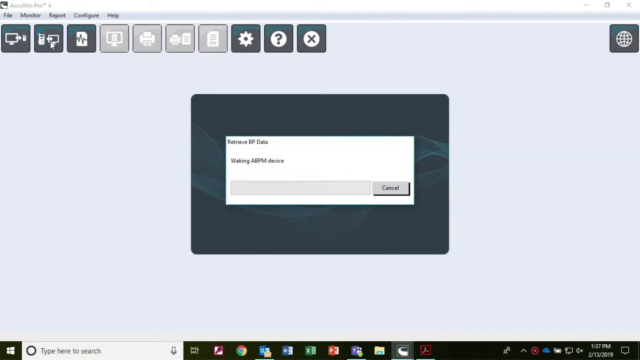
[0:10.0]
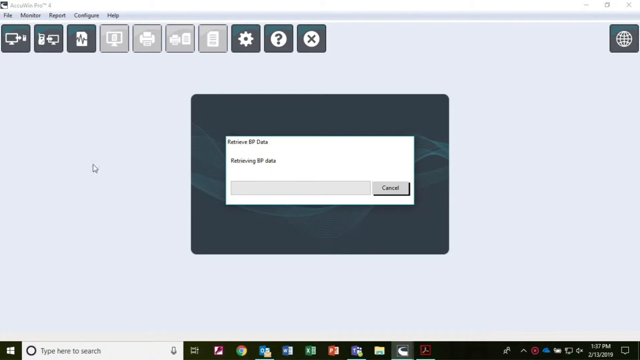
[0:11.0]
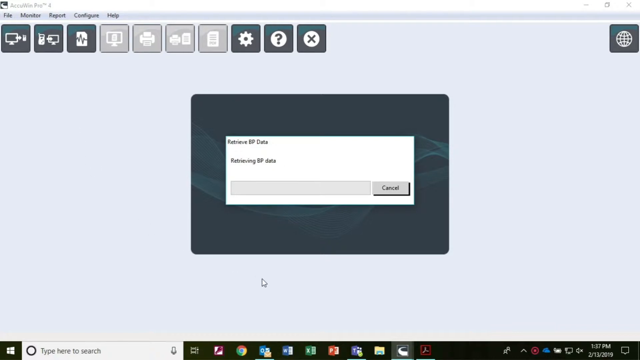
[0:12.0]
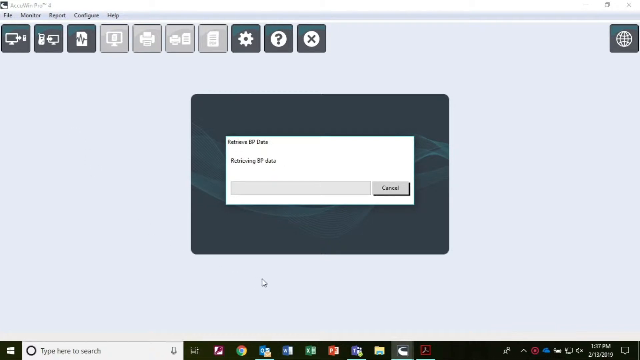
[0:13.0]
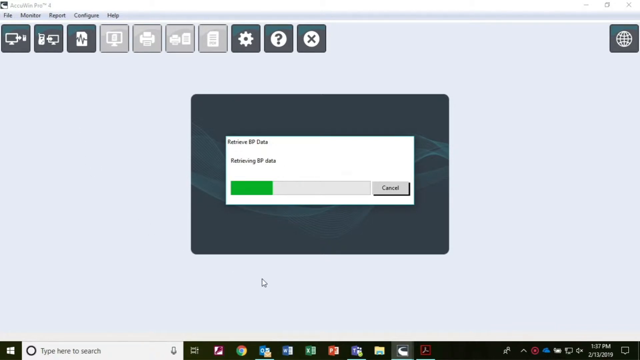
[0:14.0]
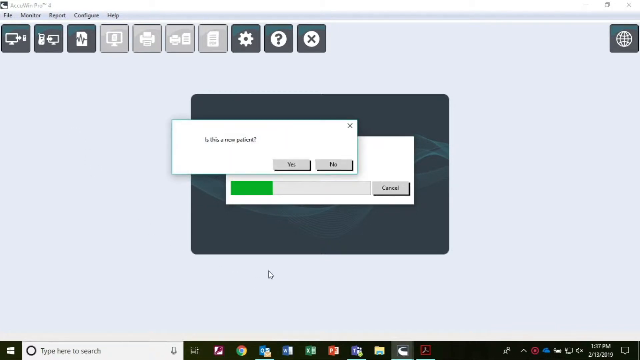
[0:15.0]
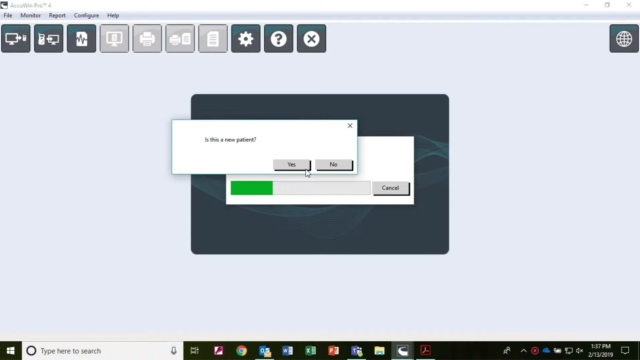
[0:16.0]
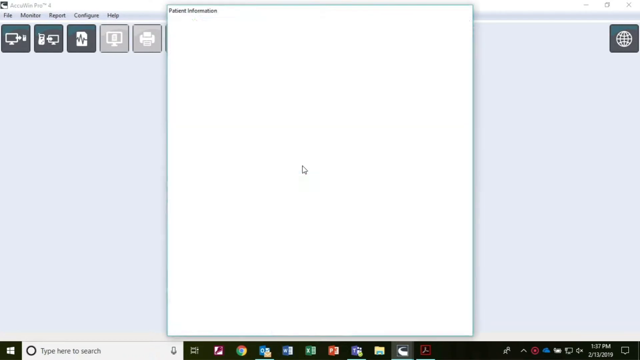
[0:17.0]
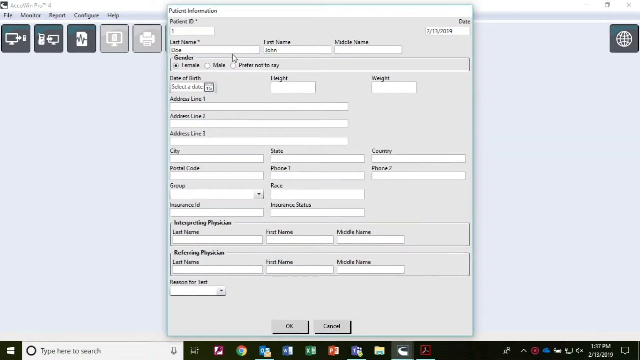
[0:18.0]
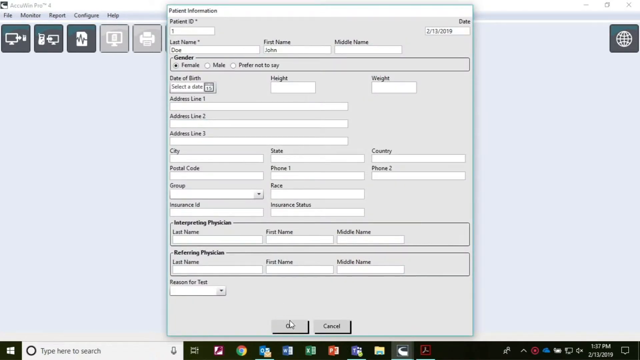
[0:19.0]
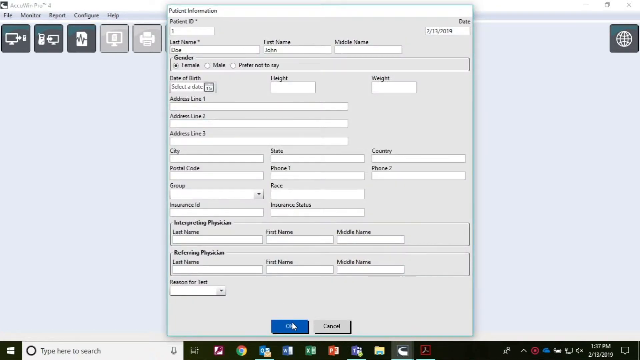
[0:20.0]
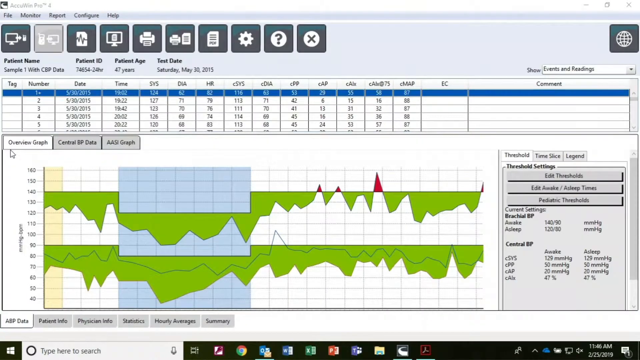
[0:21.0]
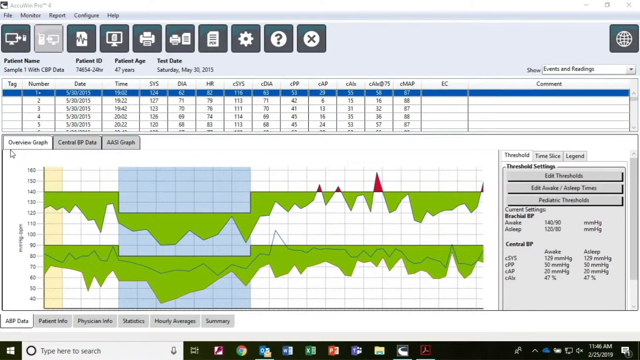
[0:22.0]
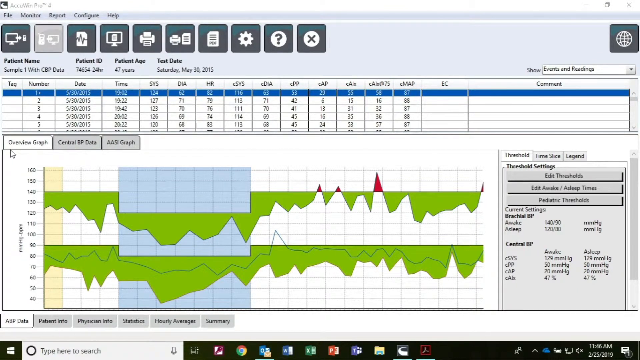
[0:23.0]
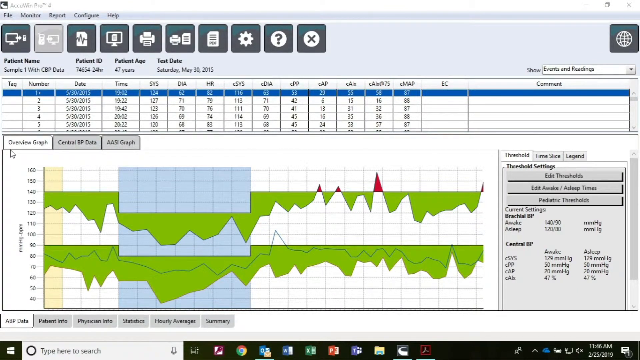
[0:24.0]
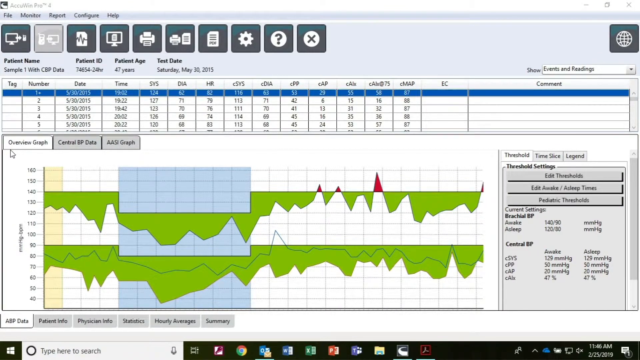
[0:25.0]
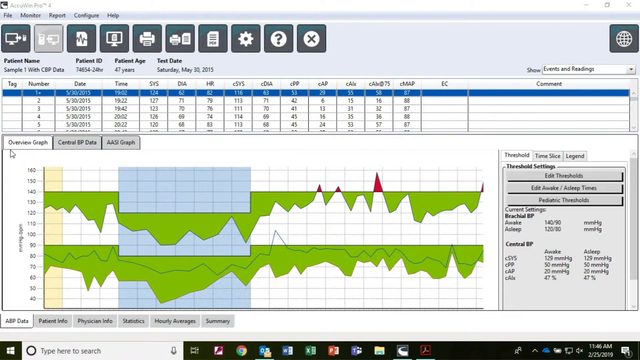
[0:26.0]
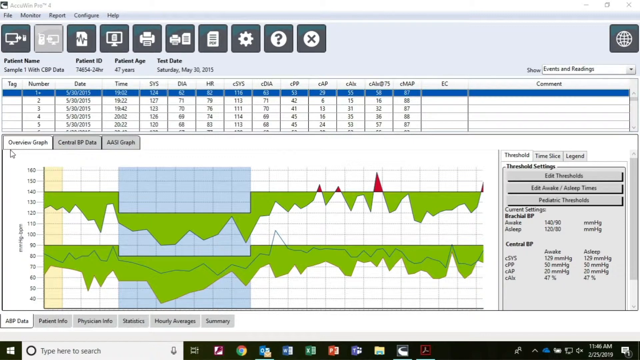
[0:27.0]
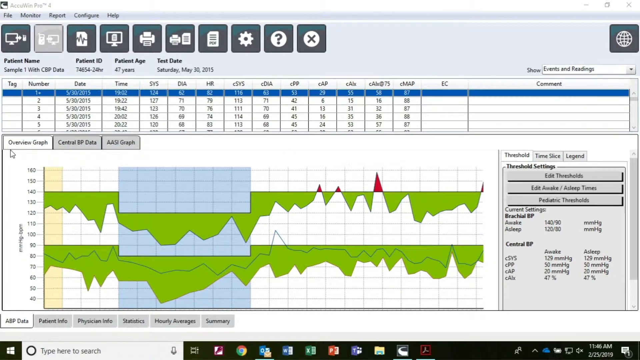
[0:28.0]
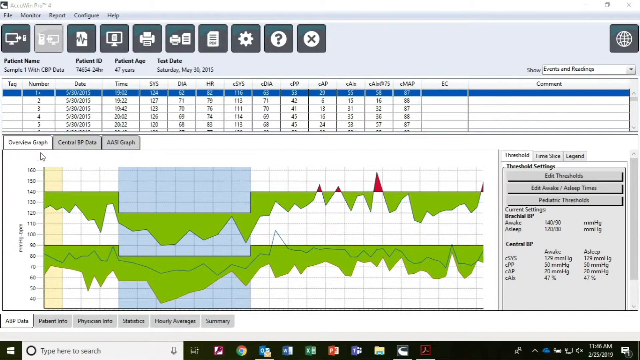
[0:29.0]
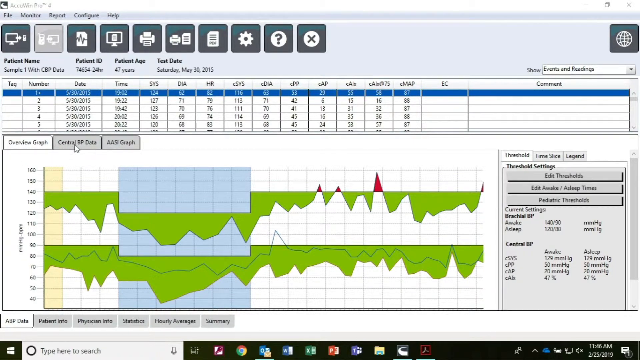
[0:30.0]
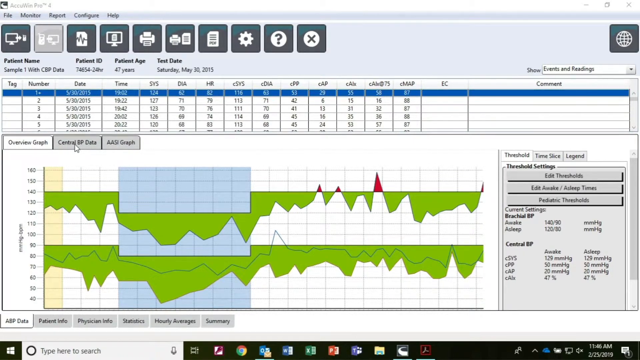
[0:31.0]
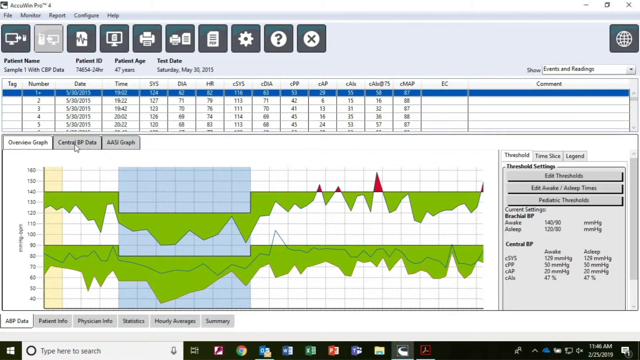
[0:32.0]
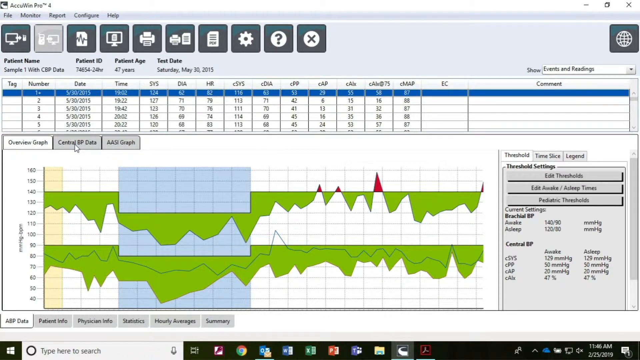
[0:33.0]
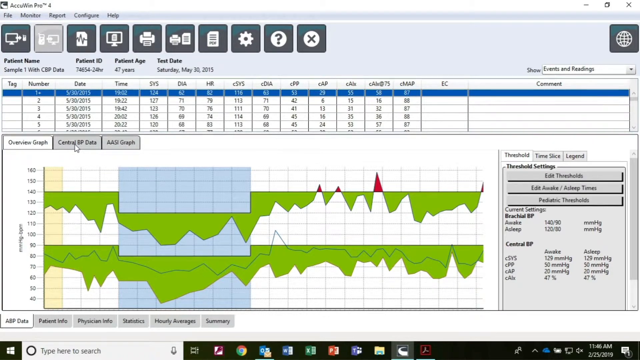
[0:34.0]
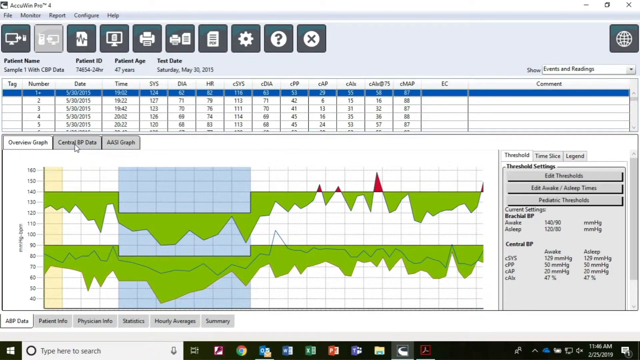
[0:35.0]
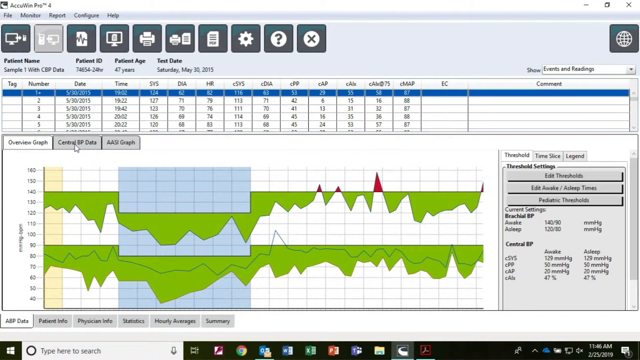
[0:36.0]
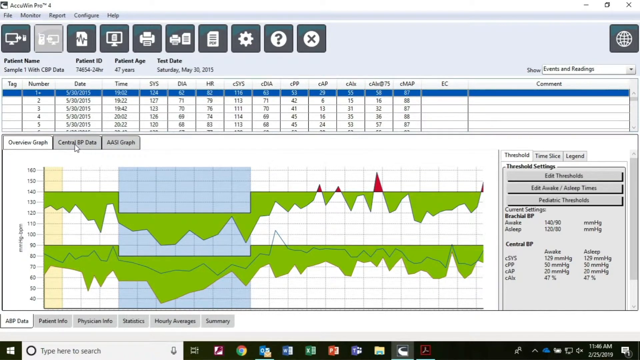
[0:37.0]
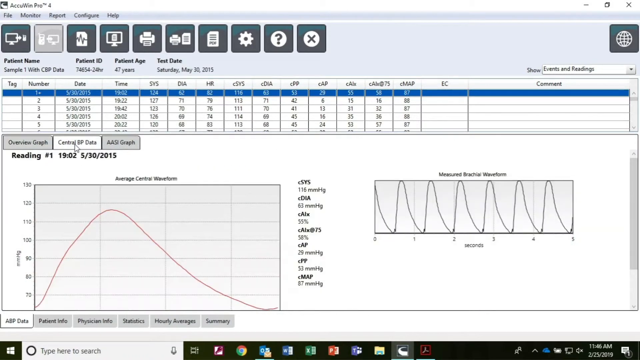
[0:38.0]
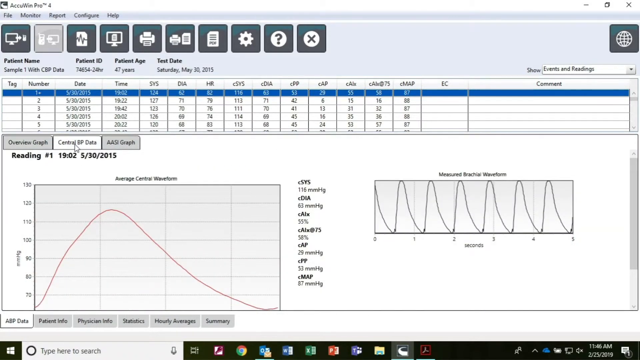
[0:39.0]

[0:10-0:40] On a Windows 11 laptop, a box appears to have been connected, and the SunTech OcuWin Pro 4 application is open. The user seems to click an option to transfer information from the box to the laptop. Messages appear reading "data waiting to be transferred," "retrieving data," and "retrieving complete," followed by what seems to be the question "is this the patient." They click yes, and a patient information form appears with fields for patient ID, last name, first name, middle name, gender, date of birth, height, weight, address, city, state, country, postal code, phone number, and group with a drop-down box, plus fax, insurance information, physician first, last and middle name, referring physician, and reason for test, with OK and Cancel buttons. They click OK, and a graph screen appears showing the patient's name, patient ID, age, and test date, along with a graph that has green on it and some red spikes. An overview of the graph is shown, and the user appears to hover over control BP data.